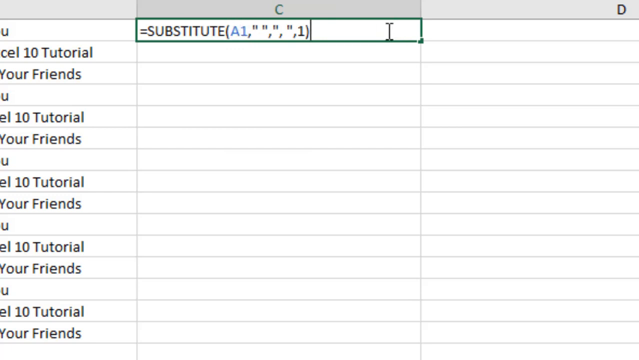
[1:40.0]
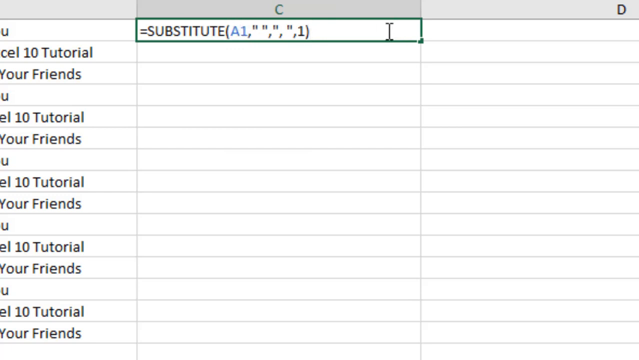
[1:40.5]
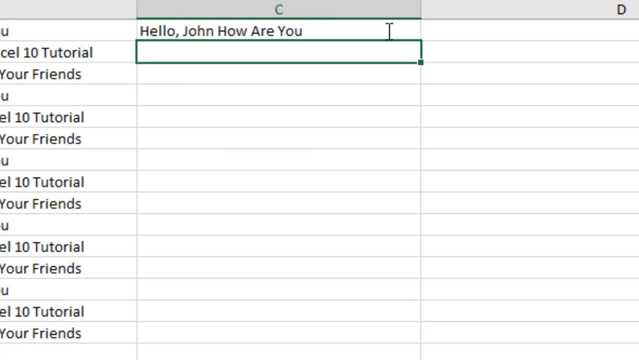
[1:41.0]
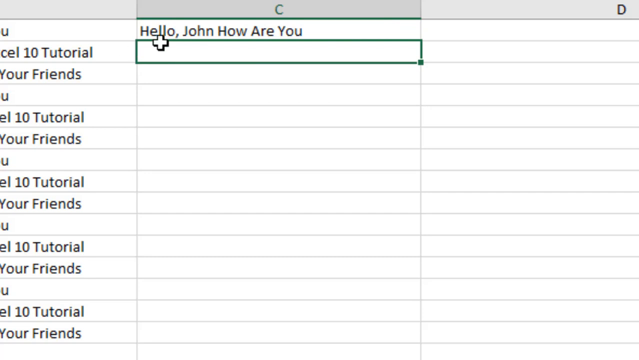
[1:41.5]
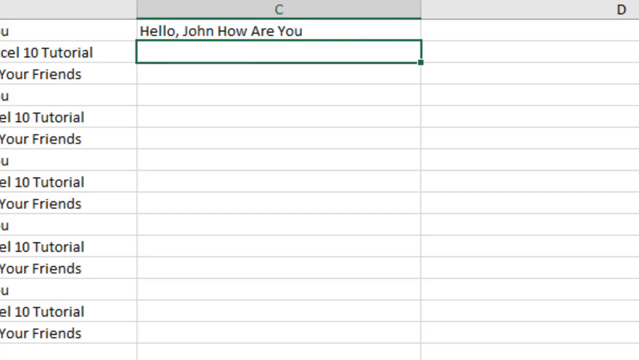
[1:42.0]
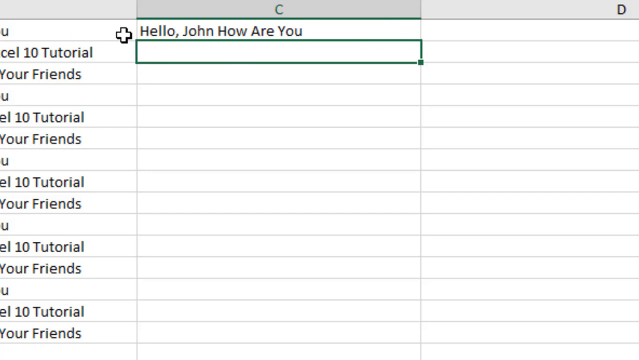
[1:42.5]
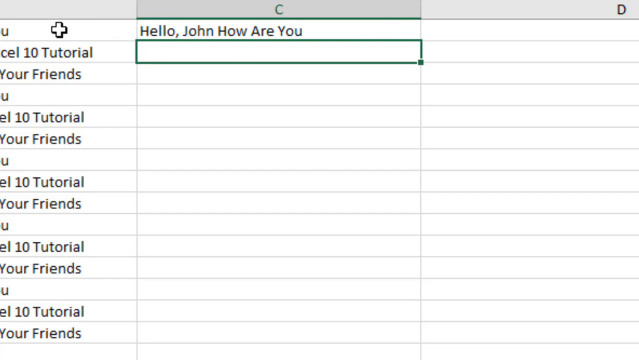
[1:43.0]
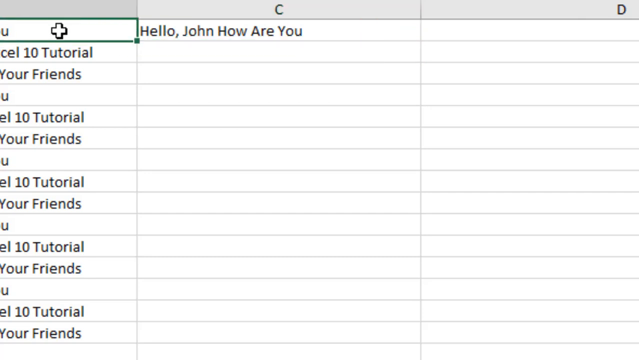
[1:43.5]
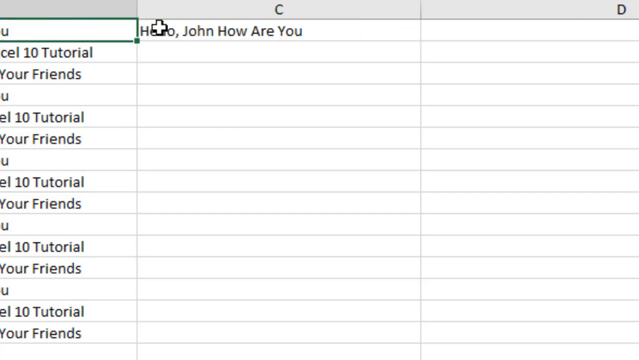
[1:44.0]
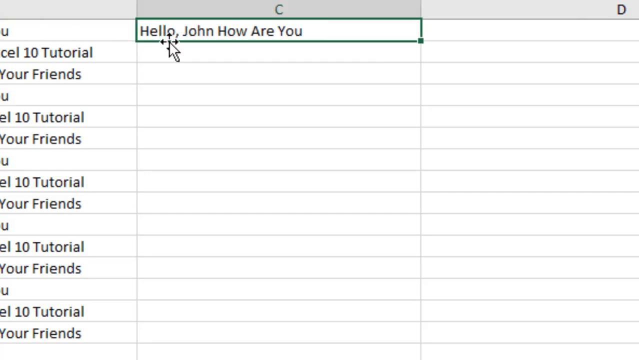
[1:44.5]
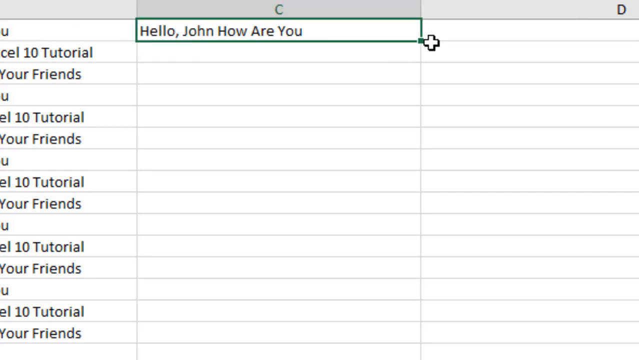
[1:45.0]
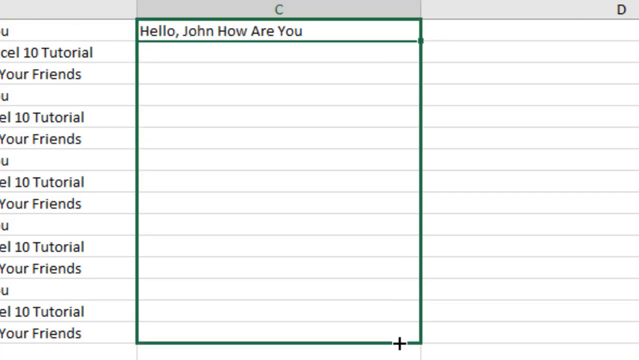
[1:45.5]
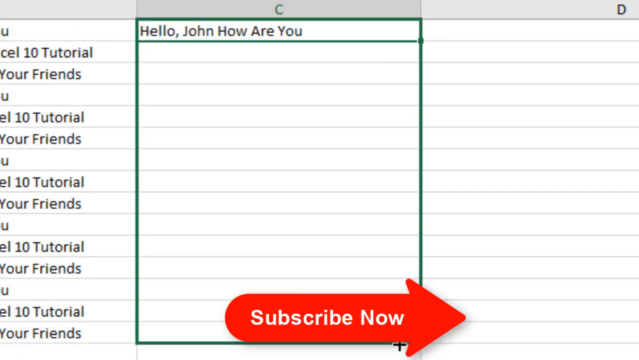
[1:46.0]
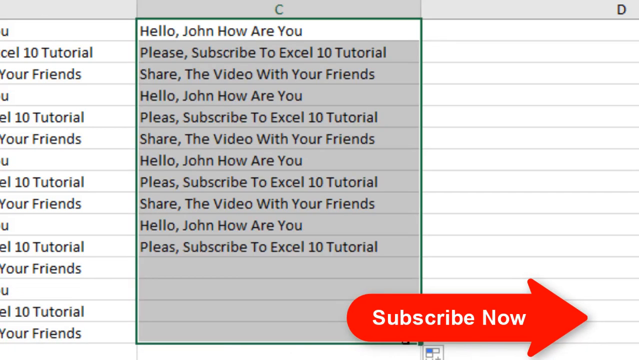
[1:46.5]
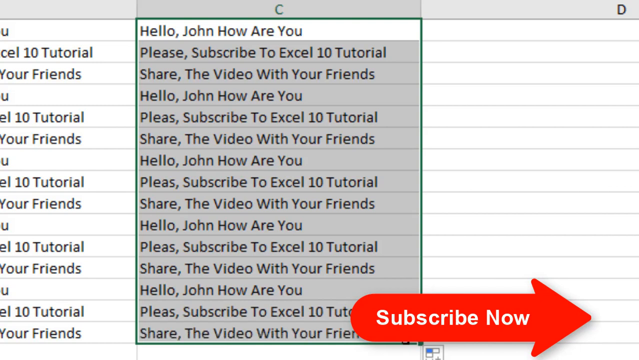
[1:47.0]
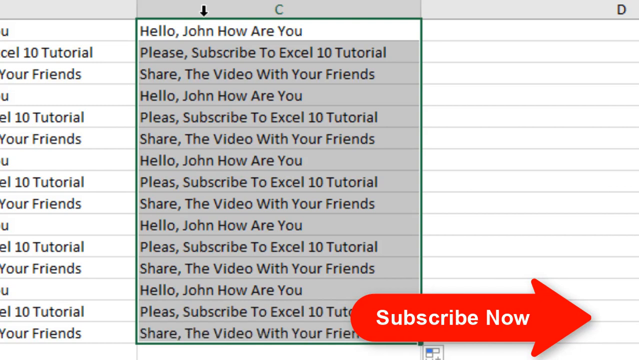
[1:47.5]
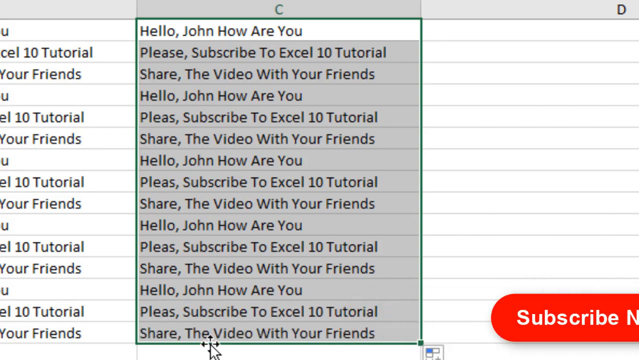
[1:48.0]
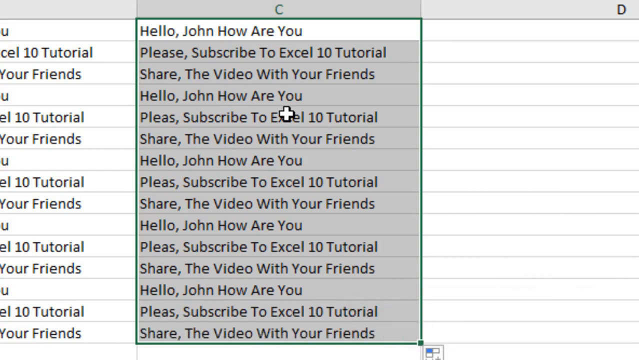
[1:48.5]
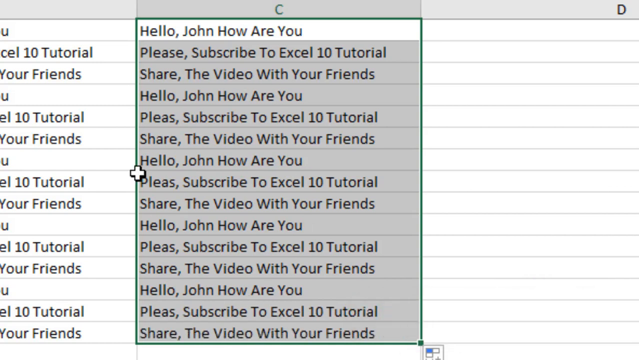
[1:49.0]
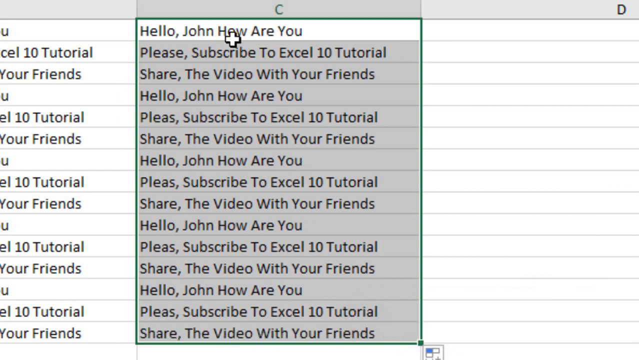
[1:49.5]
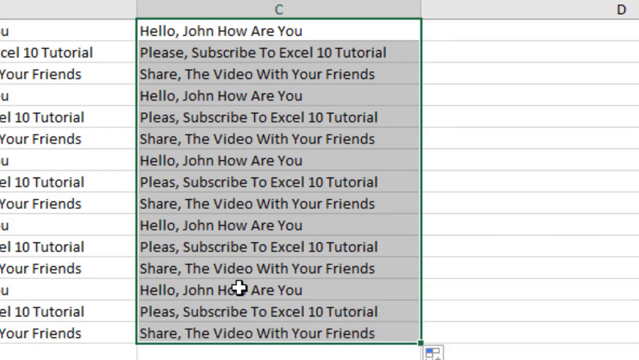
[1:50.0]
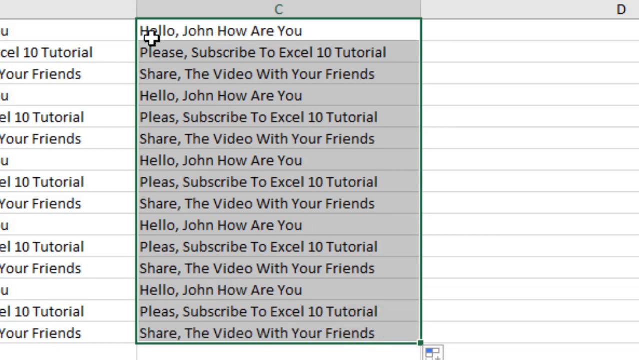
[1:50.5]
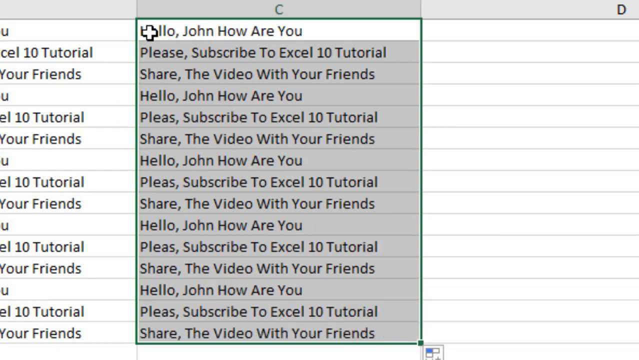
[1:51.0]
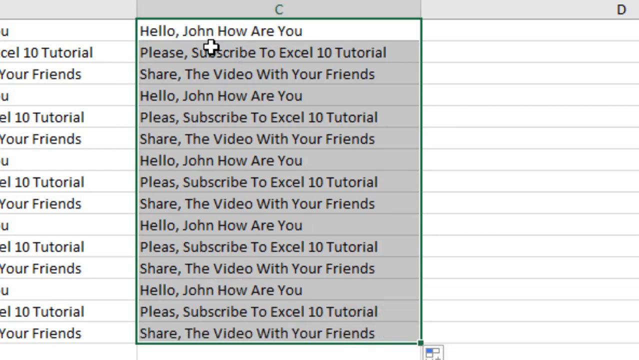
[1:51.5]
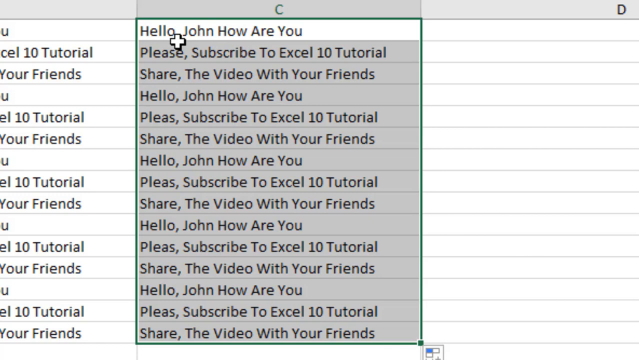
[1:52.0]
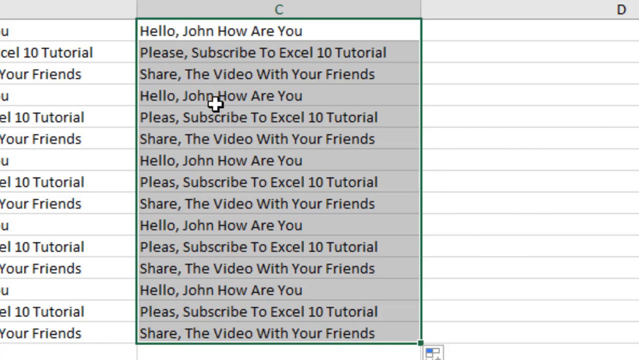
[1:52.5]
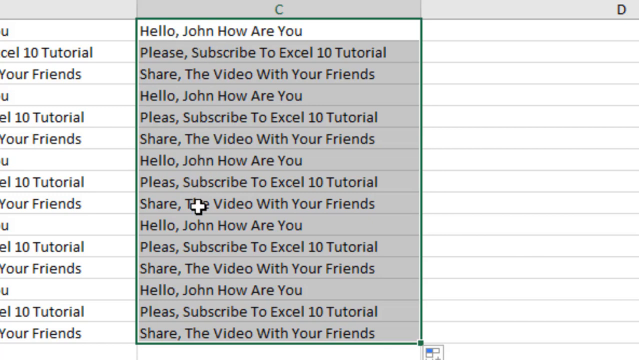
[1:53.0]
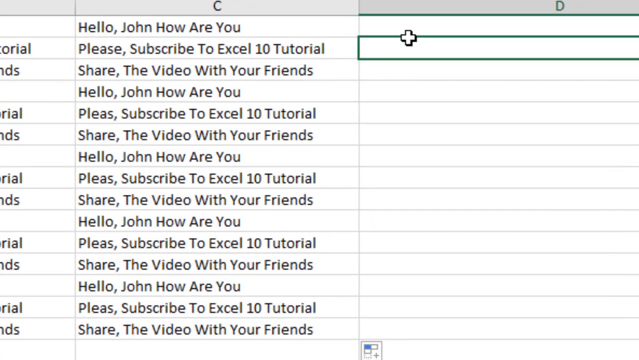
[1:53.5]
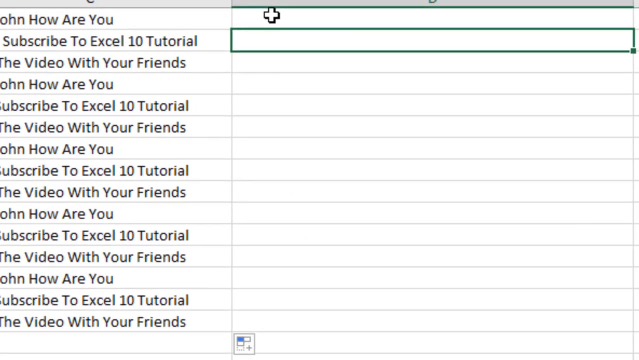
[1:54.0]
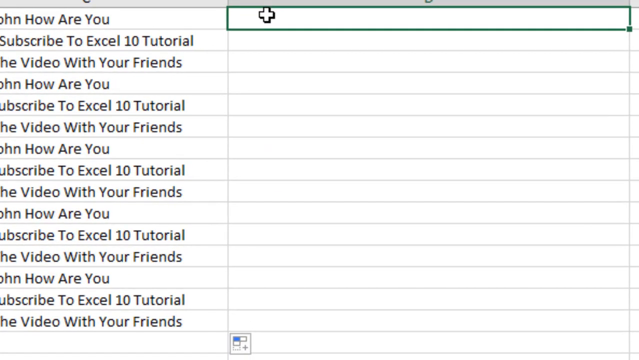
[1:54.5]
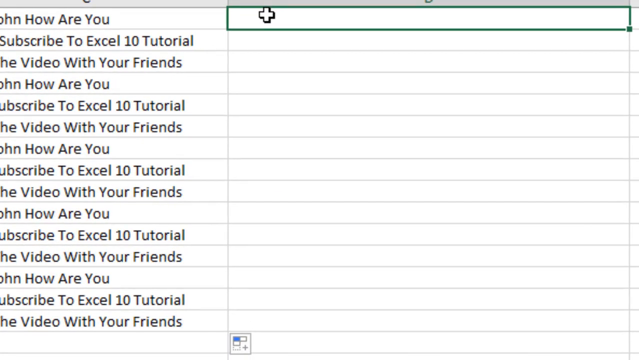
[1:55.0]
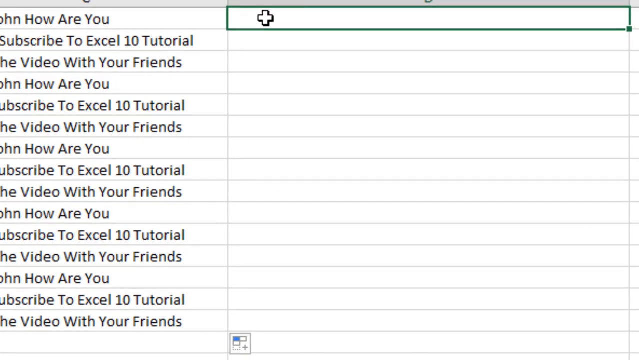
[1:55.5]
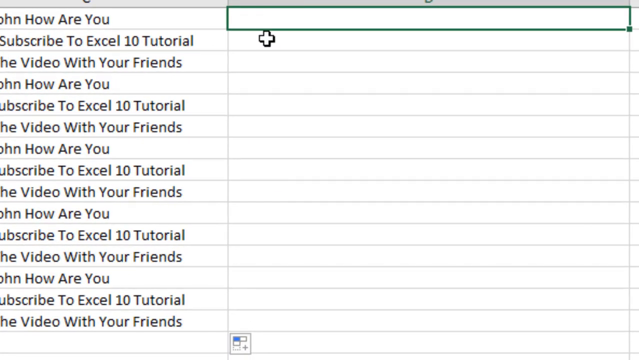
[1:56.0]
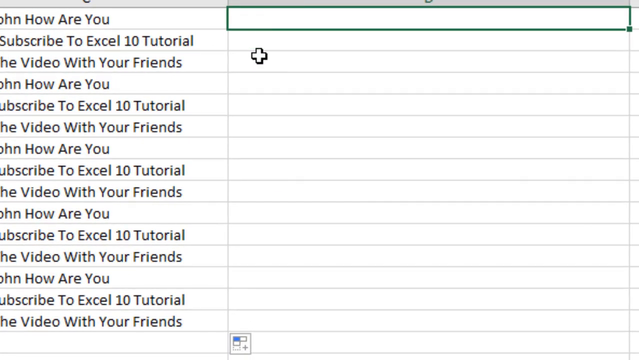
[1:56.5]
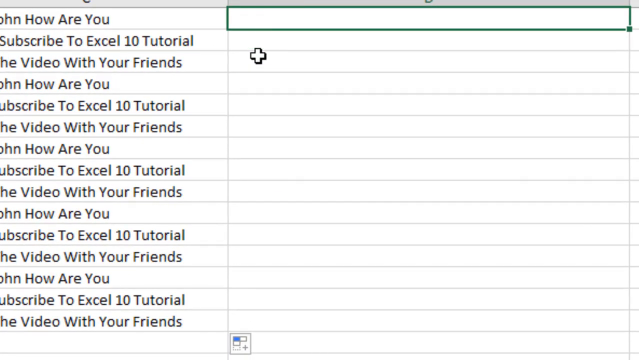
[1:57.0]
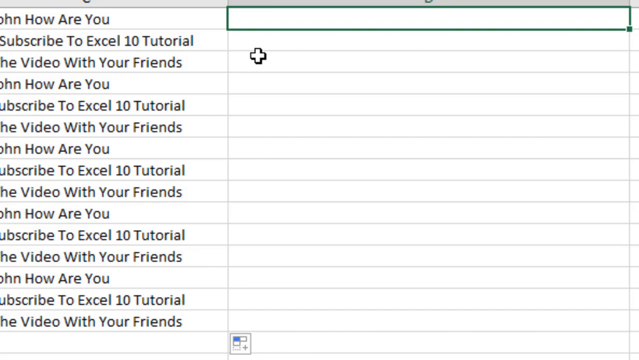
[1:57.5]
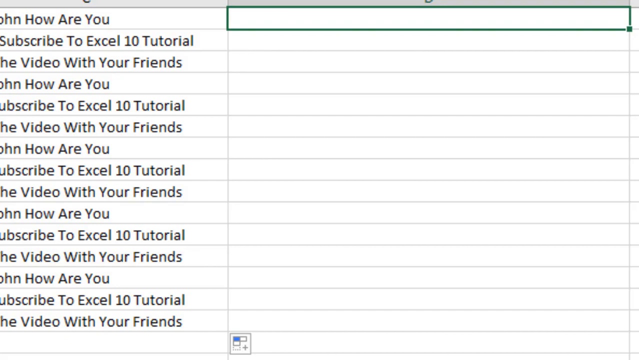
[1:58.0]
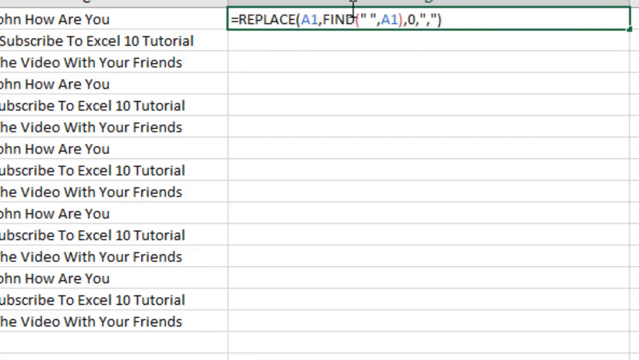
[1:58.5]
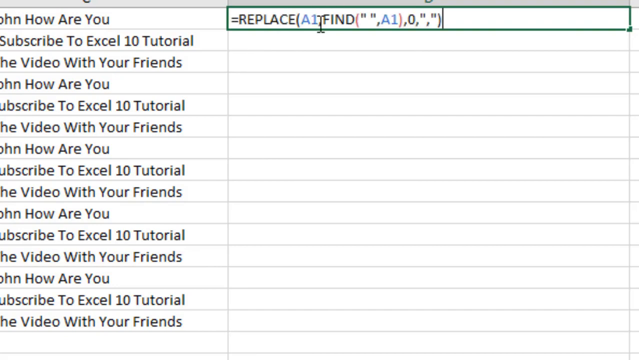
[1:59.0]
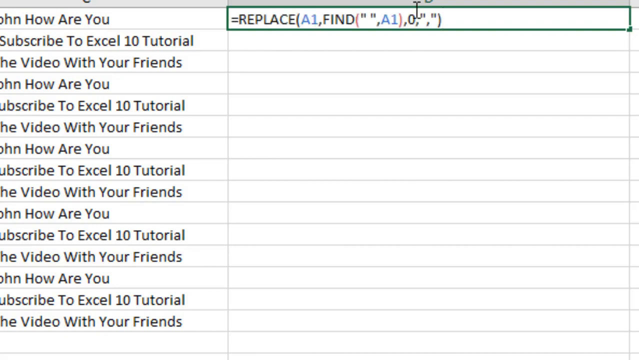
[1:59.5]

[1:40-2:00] The person does the same thing in column C that was done in column B. Column C looks essentially identical to column B, with the same font and structure, and no clear change is visible. The person then moves to column D and appears to do the same thing again; there might be some difference in how the sentences look, but it is unclear.